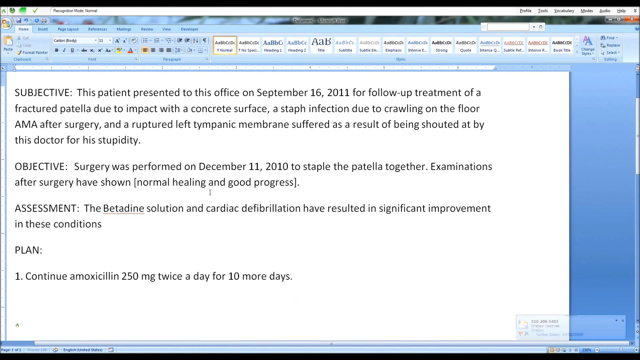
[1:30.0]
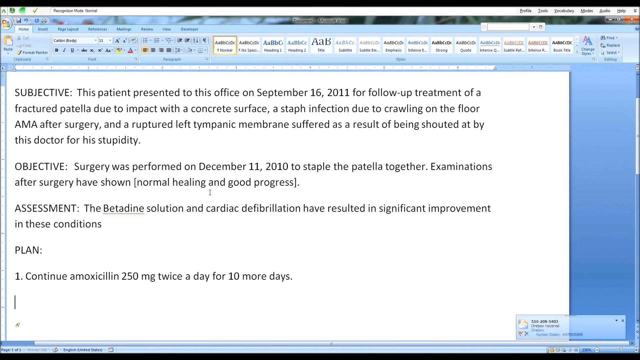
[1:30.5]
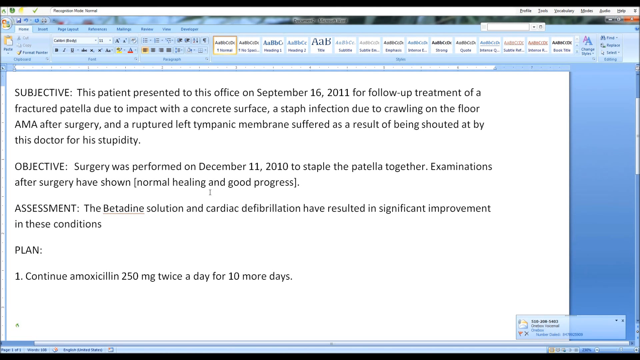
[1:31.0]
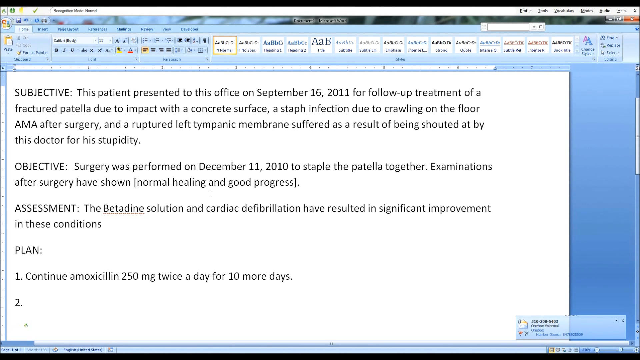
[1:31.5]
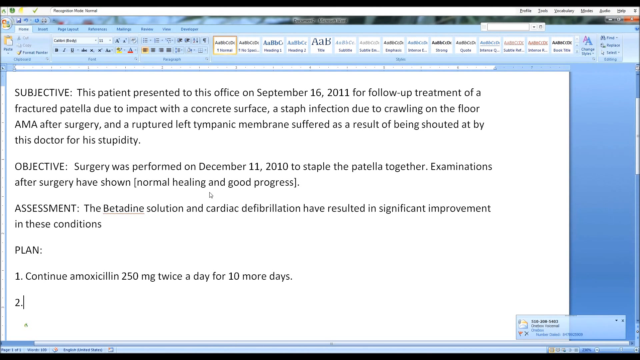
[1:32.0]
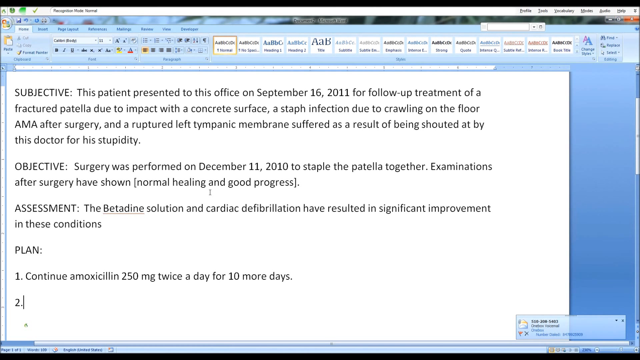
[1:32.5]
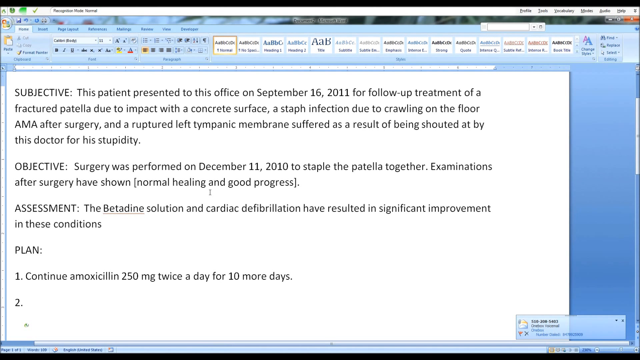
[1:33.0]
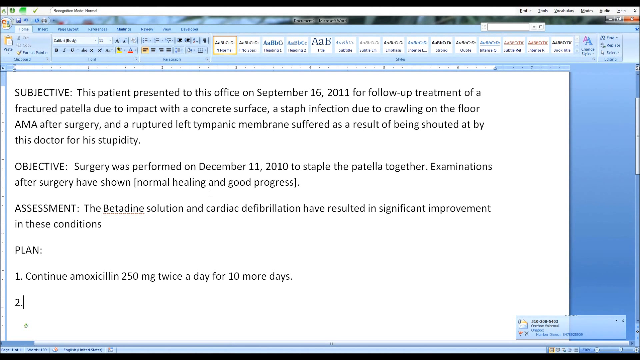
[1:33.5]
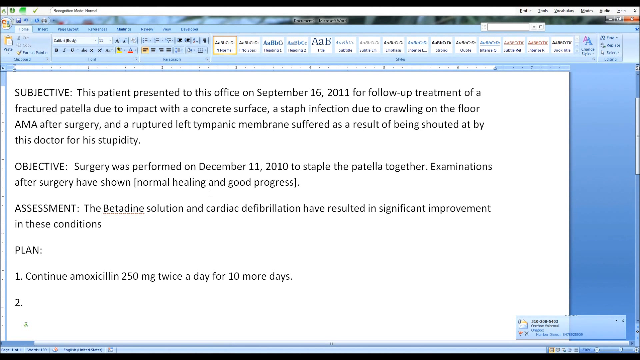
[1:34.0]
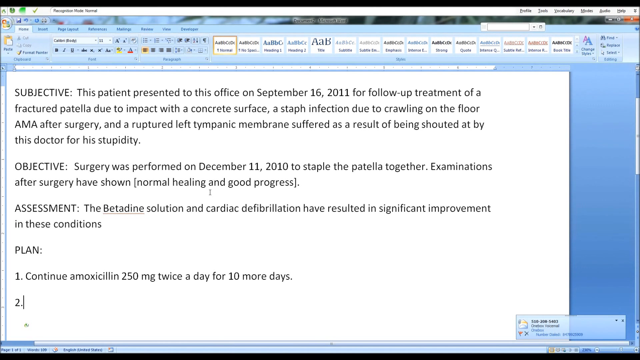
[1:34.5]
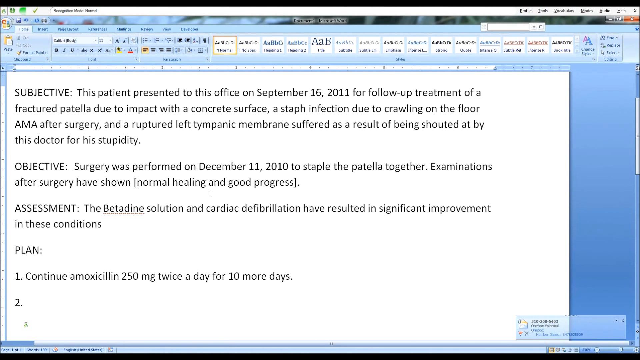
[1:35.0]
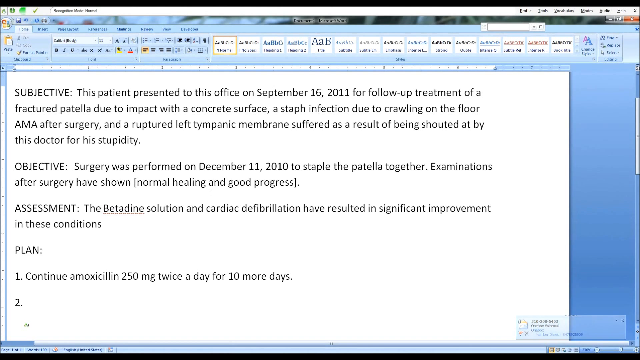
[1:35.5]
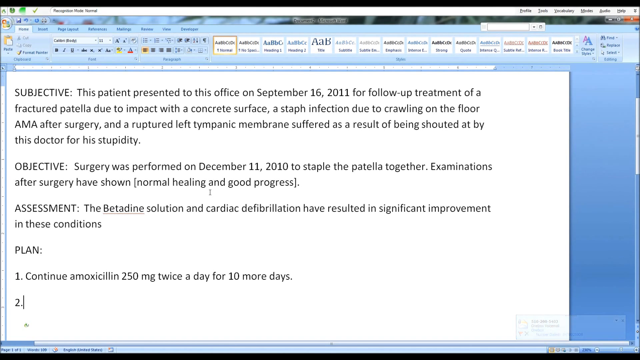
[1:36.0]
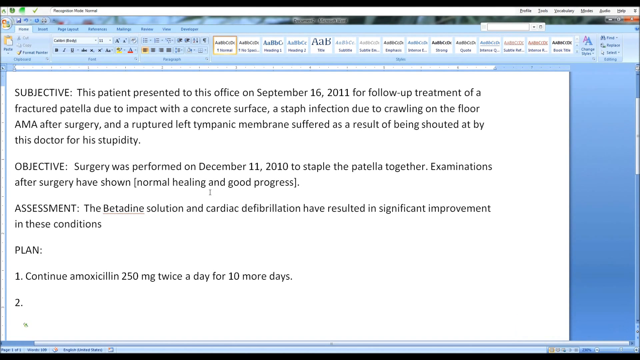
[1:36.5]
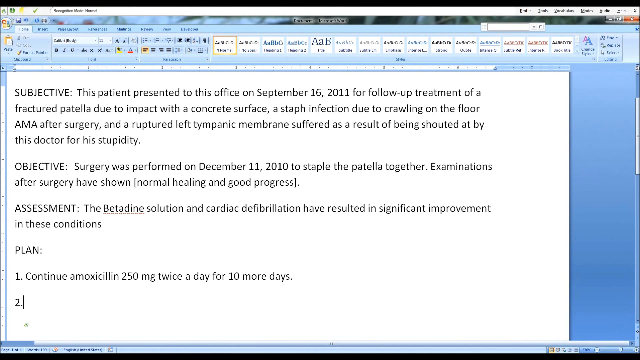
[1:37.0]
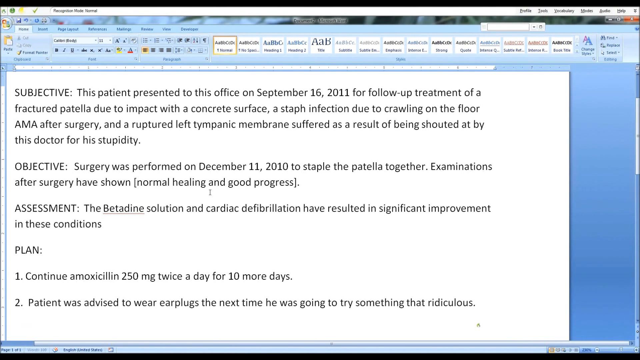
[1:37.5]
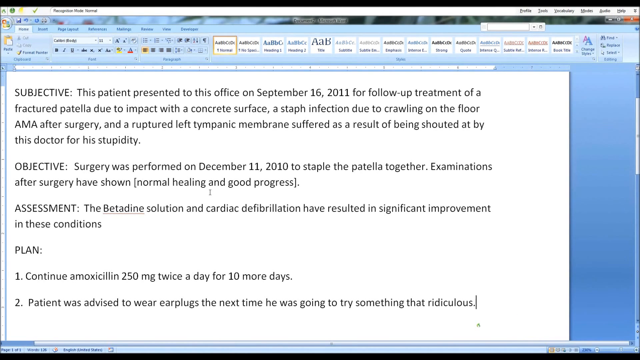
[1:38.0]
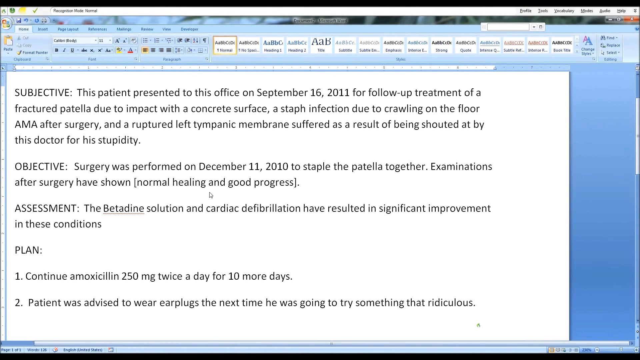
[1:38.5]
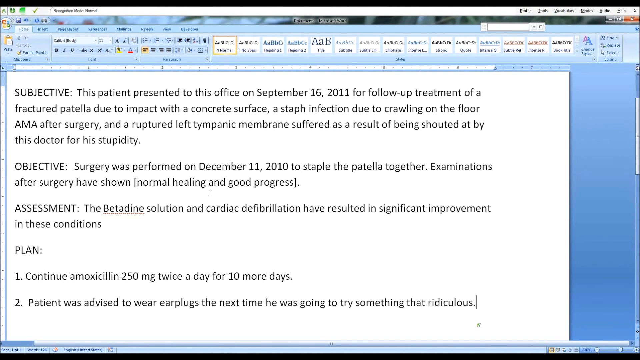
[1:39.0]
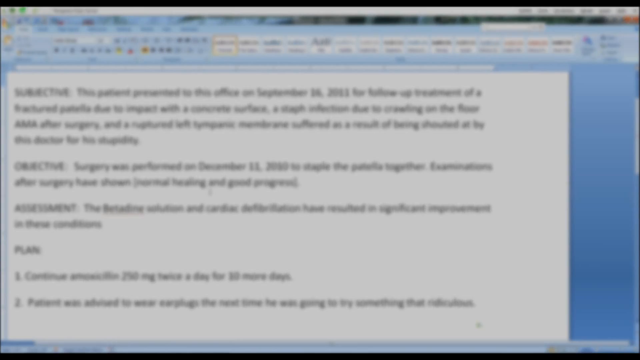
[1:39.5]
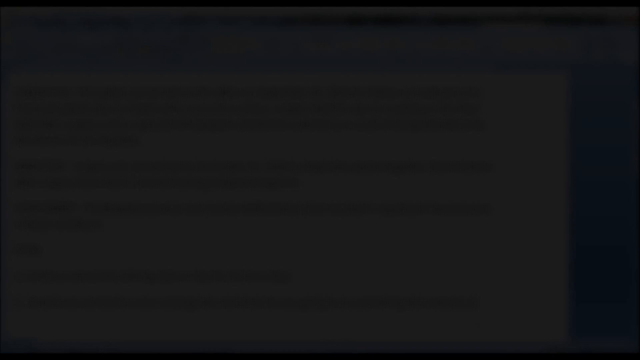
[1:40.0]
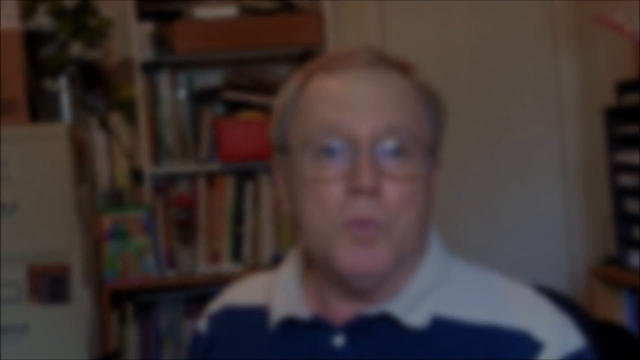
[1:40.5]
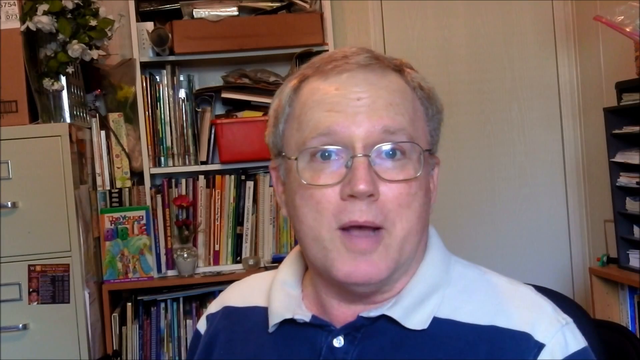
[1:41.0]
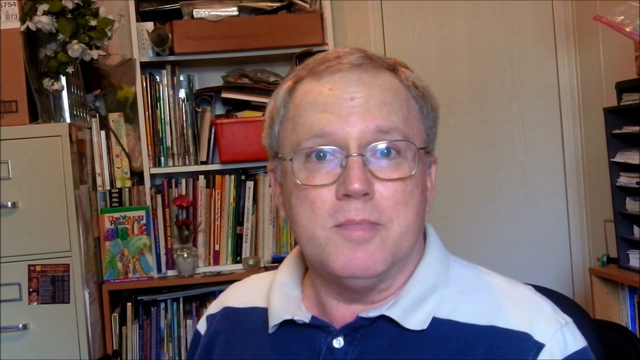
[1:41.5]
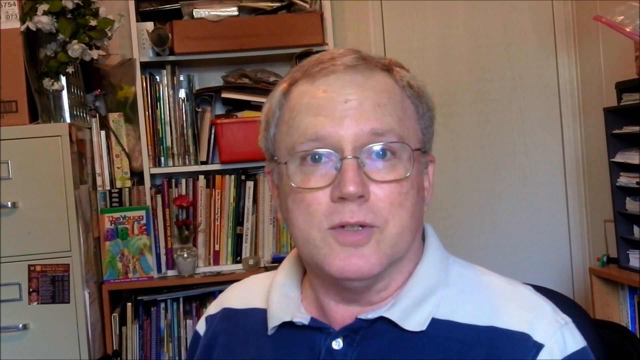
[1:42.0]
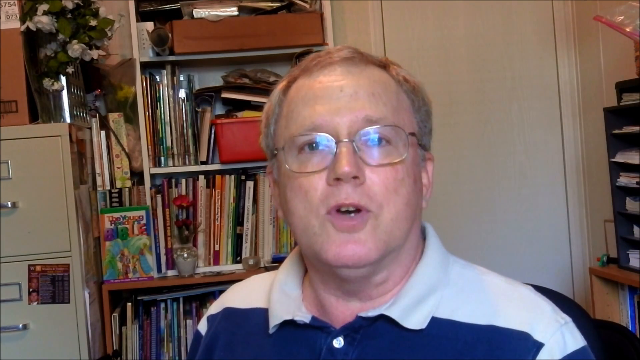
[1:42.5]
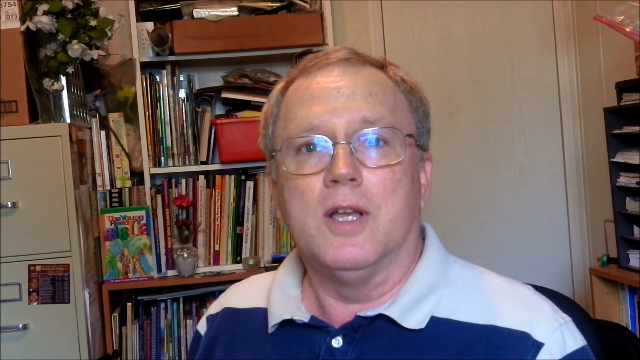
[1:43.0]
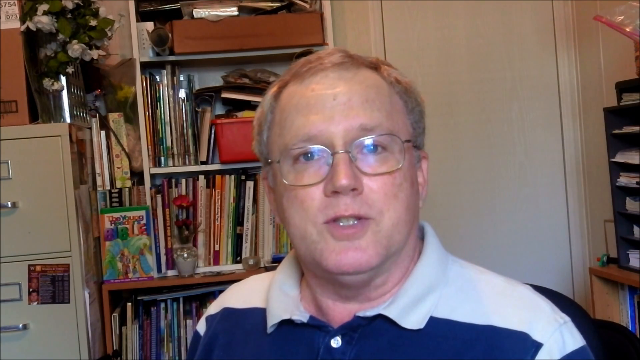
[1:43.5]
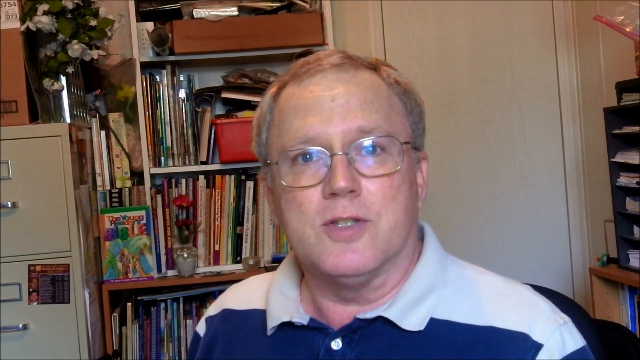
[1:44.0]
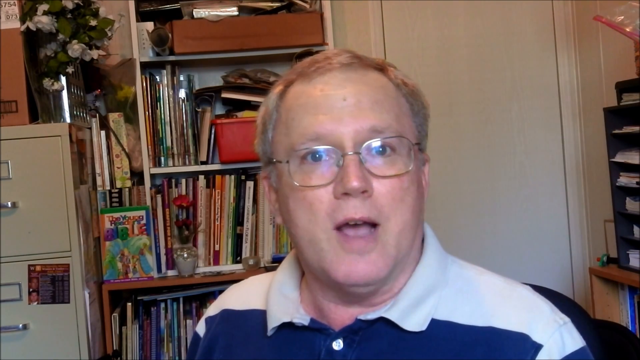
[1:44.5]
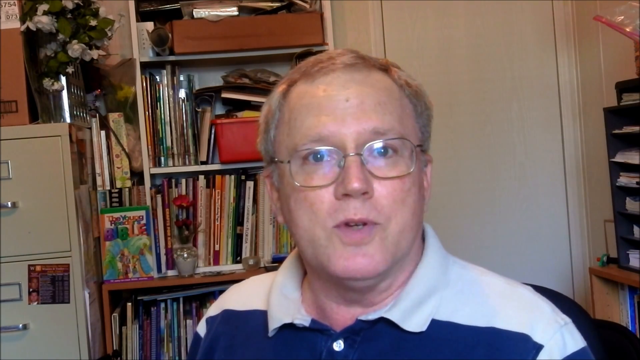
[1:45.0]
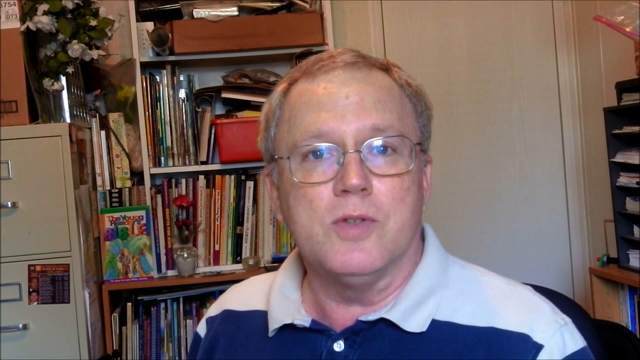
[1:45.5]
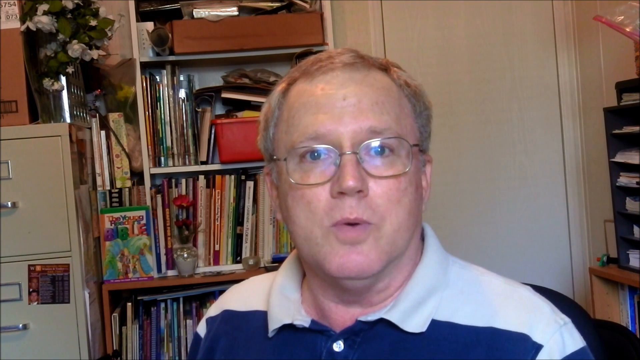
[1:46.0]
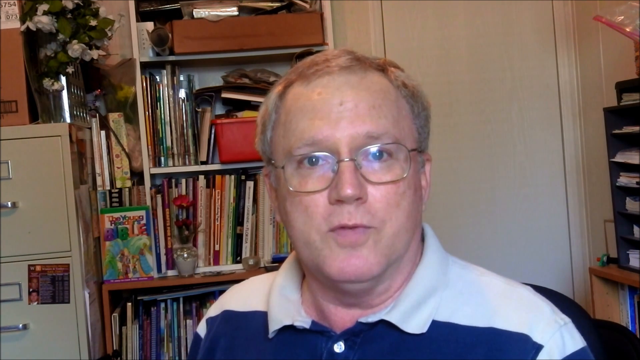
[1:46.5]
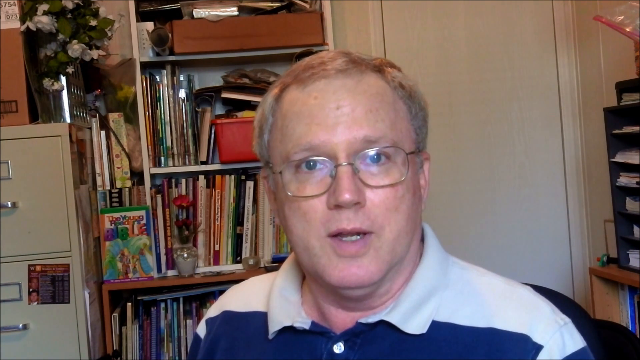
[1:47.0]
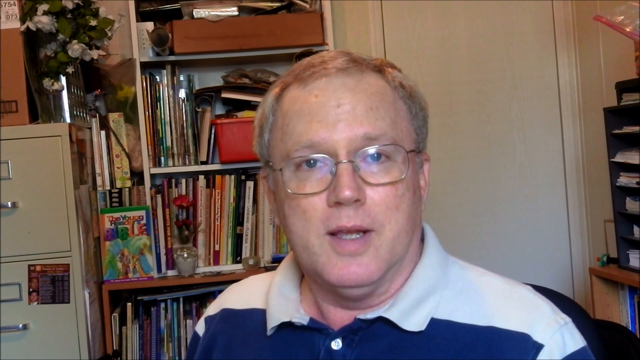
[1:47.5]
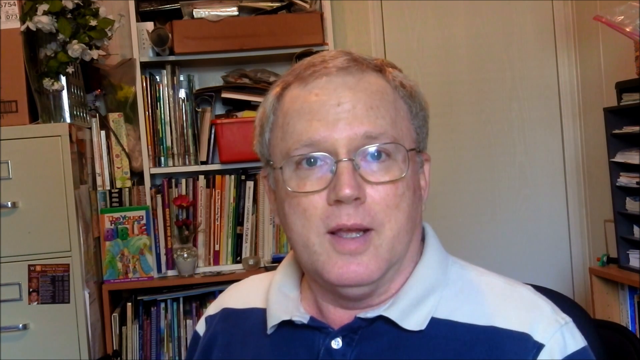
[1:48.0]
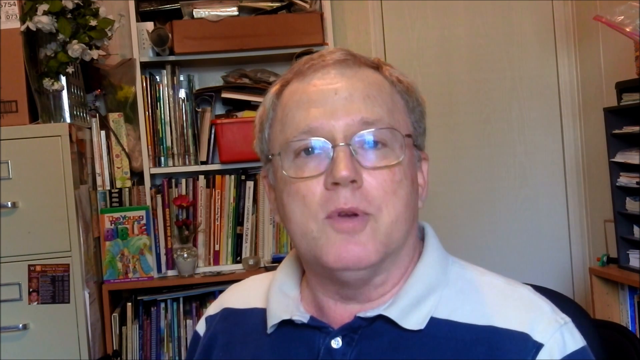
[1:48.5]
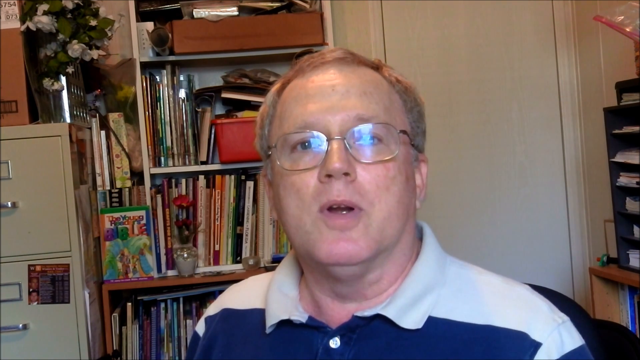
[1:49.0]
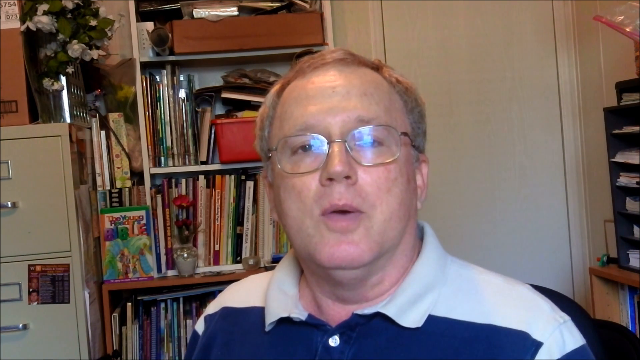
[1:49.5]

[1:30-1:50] A medical document page on a desktop computer is being edited in a Microsoft program to add patient data. The cursor is at the bottom of the screen, and "2." is typed under the PLAN: section, followed by text reading "2. Patient was advised to wear earplugs the next time he was going to try something that ridiculous". The screen fades to black and changes to the man who has been typing, a doctor or similar, back in his cluttered office. He faces the viewer head-on, his right shoulder tilted back slightly toward the messy bookshelf in the background. He moves his head very slightly up and down, his eyes focused on the camera, and appears to be talking slowly. He appears to be explaining something, addressing the viewer directly with his eyes steadily on the camera.